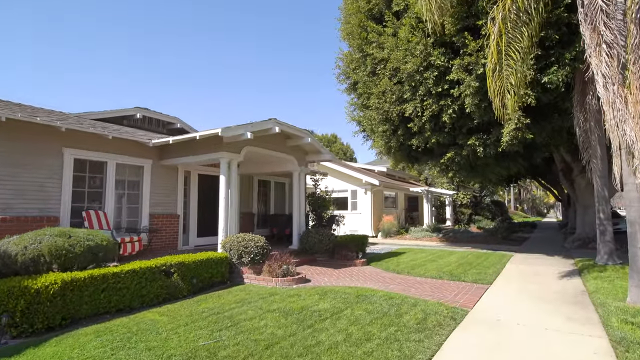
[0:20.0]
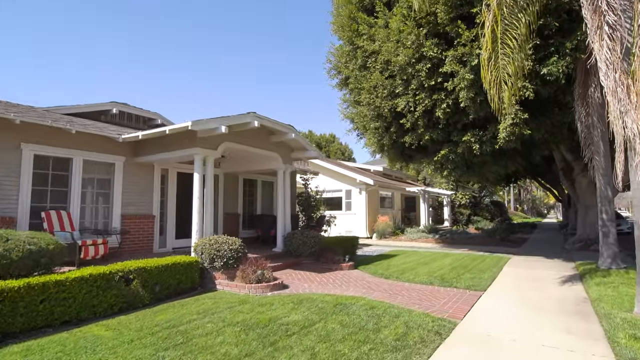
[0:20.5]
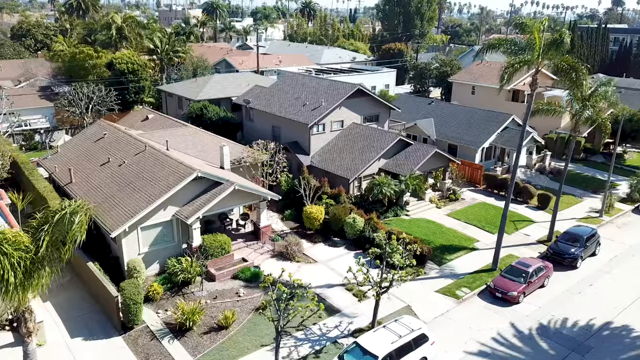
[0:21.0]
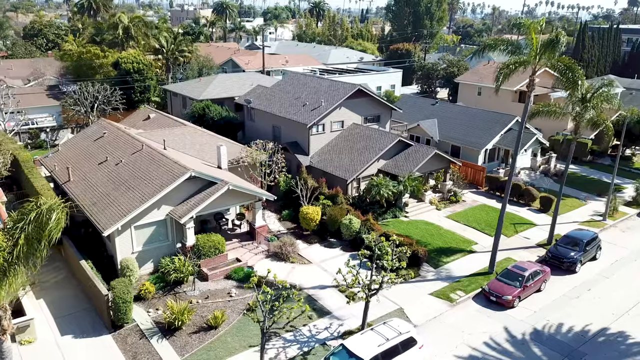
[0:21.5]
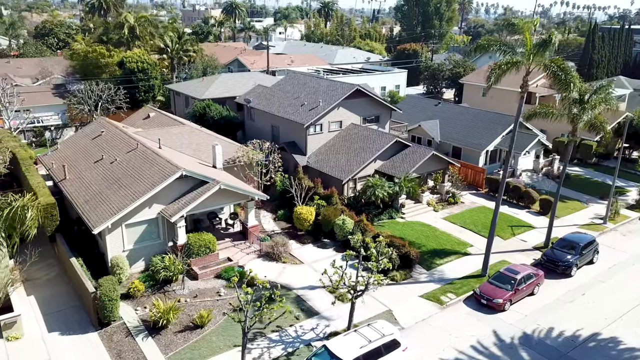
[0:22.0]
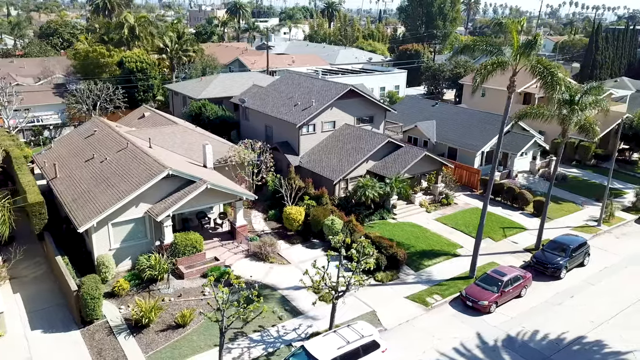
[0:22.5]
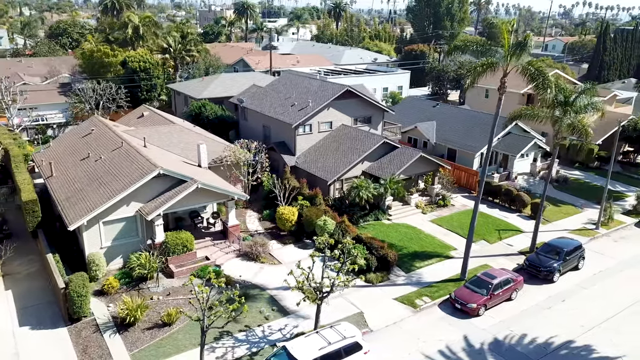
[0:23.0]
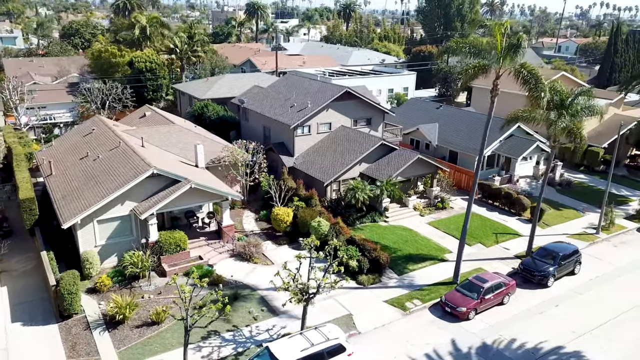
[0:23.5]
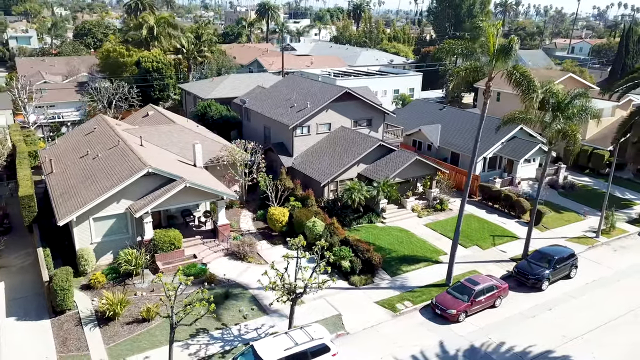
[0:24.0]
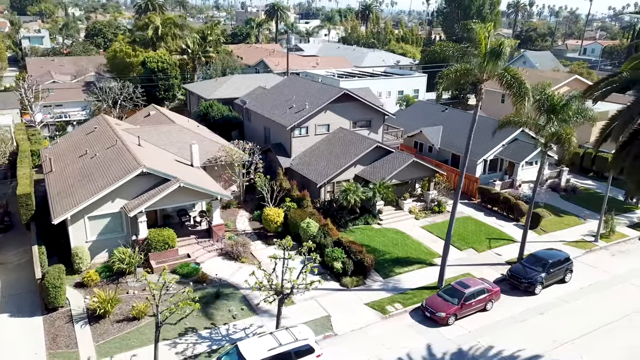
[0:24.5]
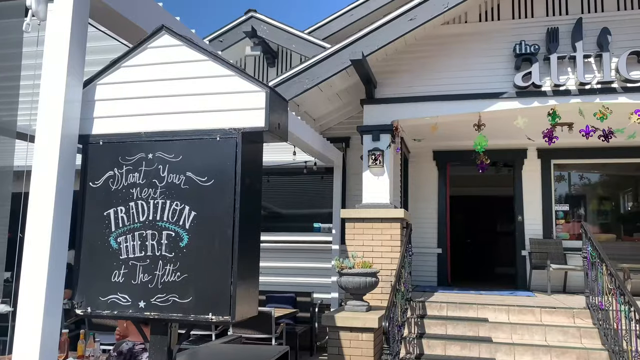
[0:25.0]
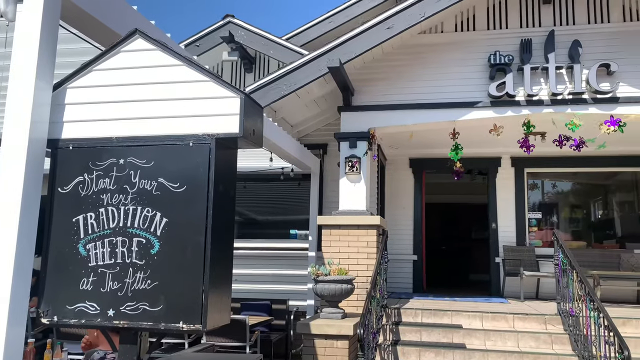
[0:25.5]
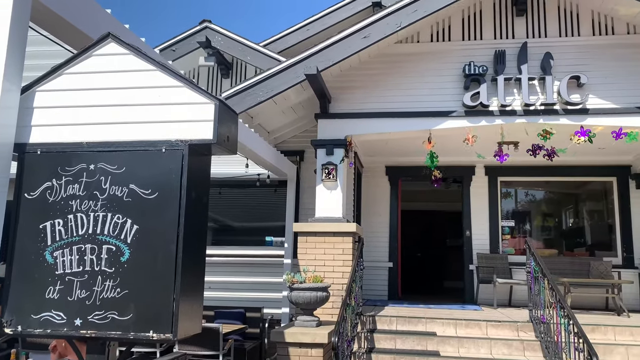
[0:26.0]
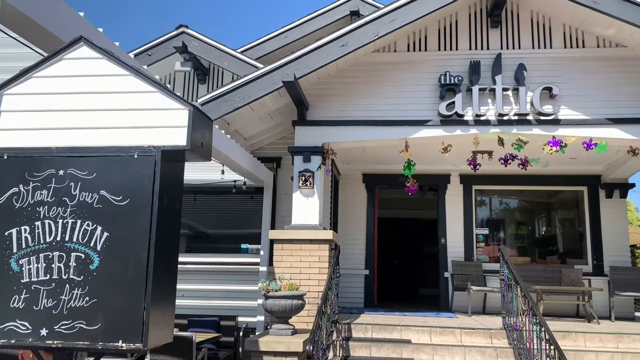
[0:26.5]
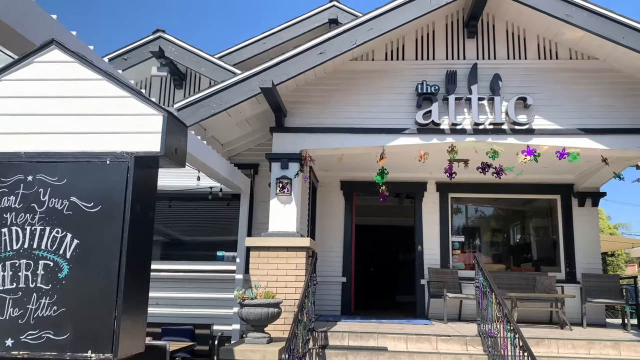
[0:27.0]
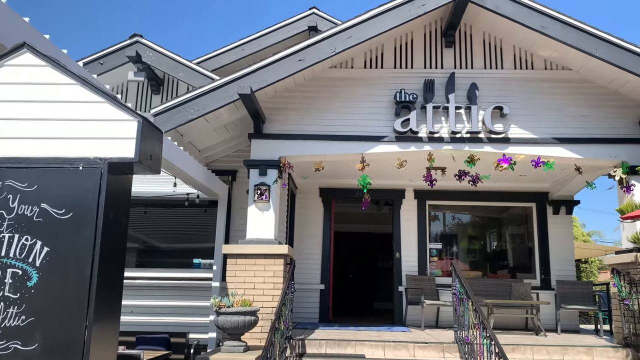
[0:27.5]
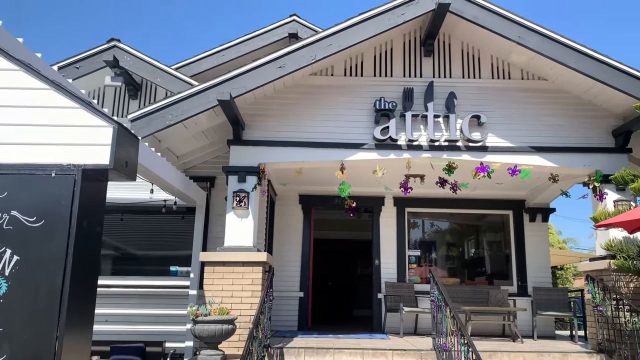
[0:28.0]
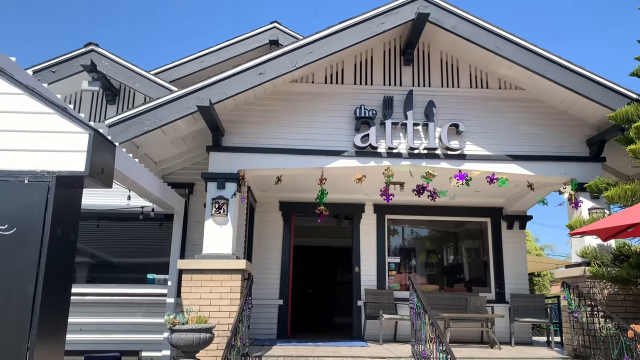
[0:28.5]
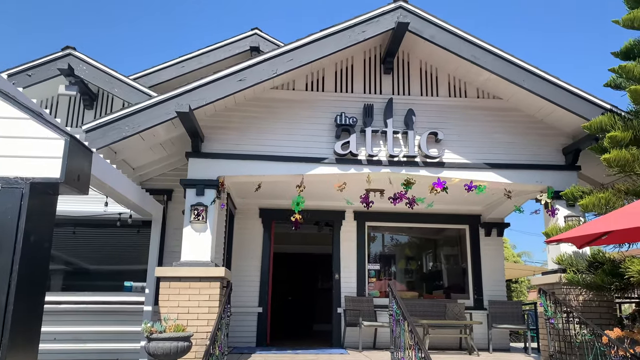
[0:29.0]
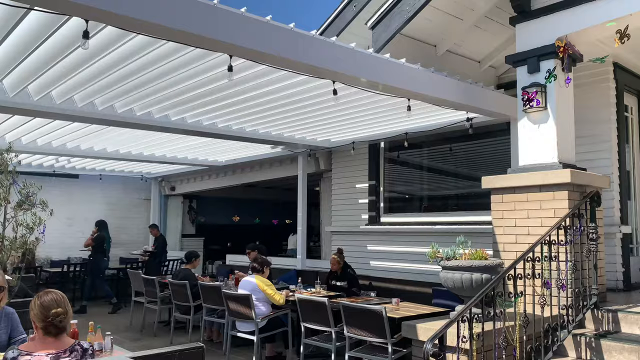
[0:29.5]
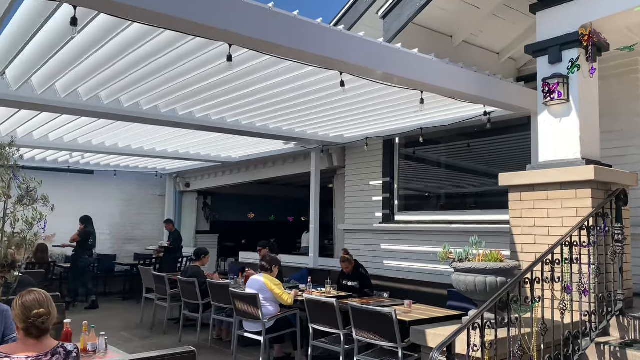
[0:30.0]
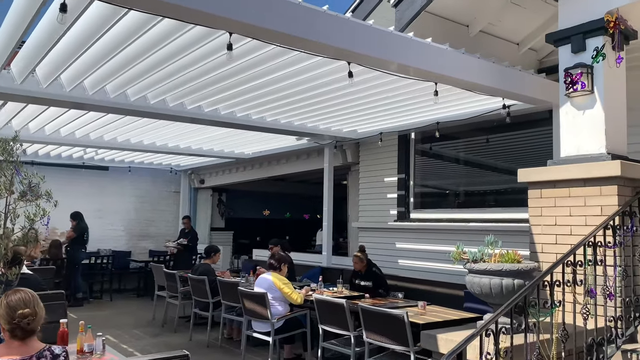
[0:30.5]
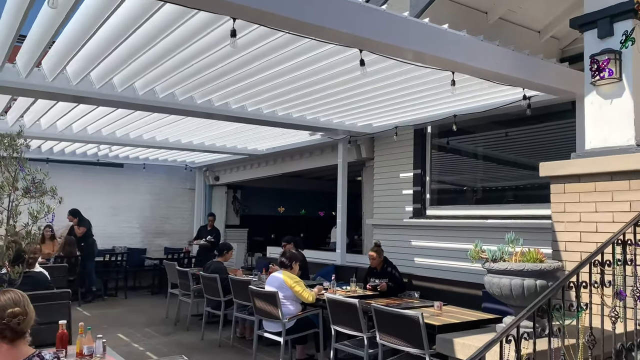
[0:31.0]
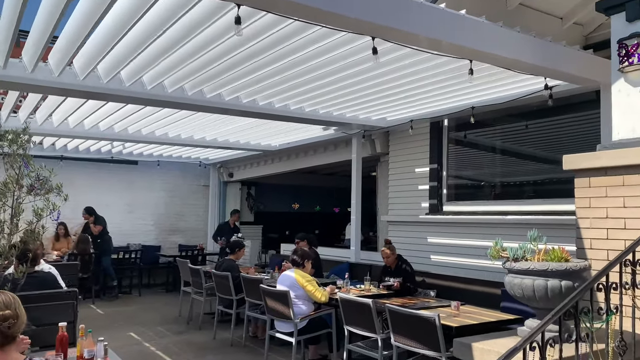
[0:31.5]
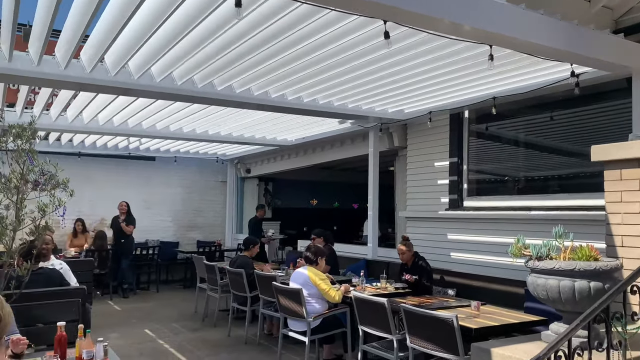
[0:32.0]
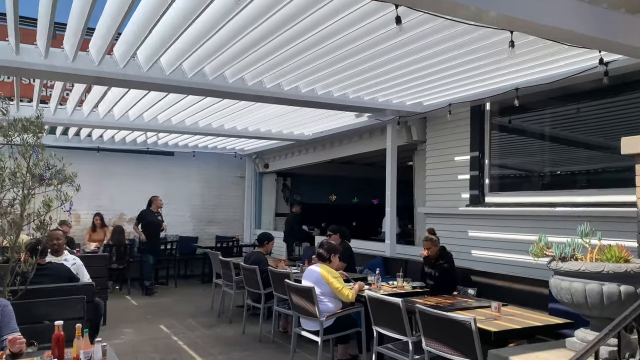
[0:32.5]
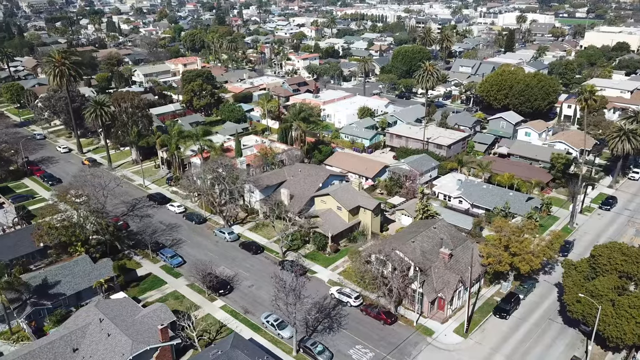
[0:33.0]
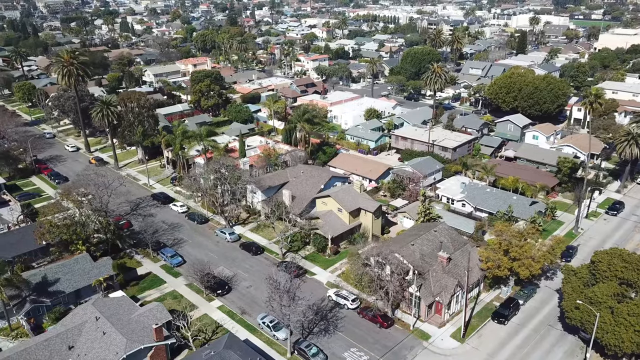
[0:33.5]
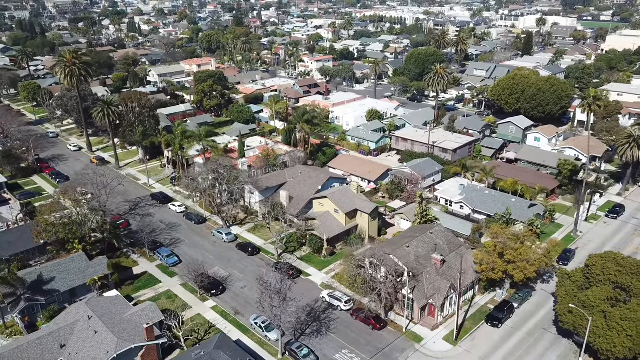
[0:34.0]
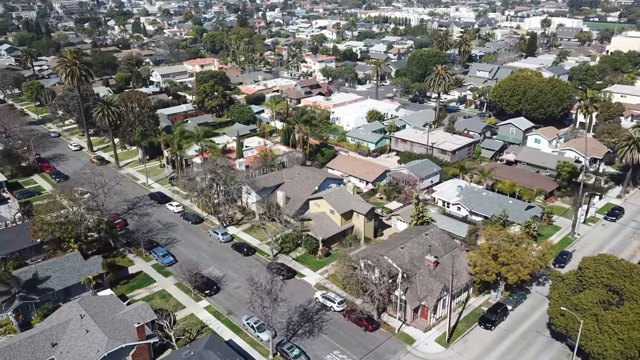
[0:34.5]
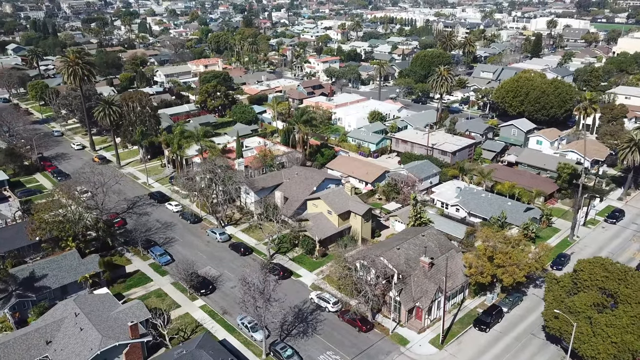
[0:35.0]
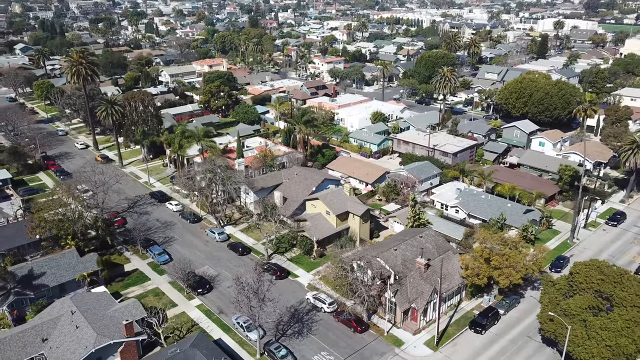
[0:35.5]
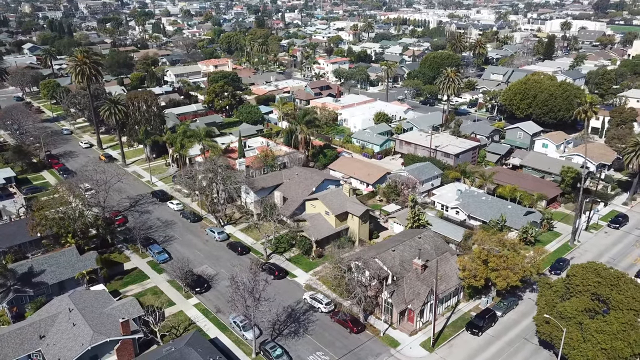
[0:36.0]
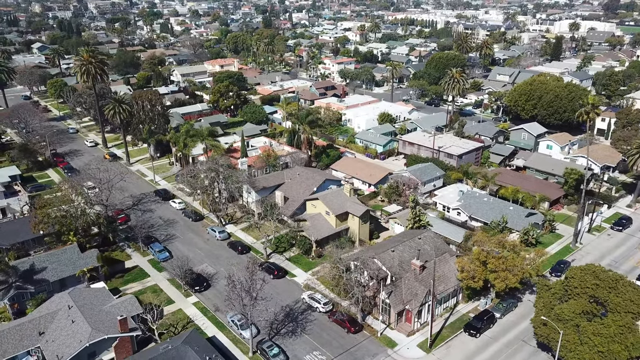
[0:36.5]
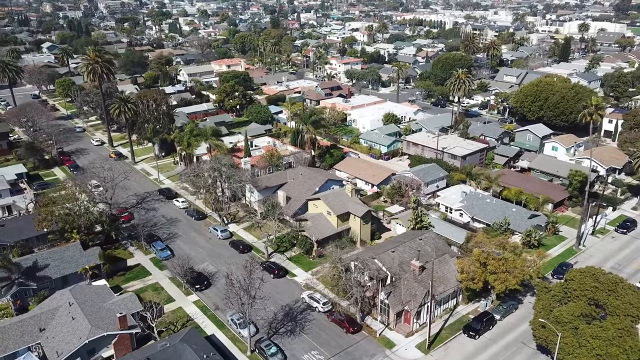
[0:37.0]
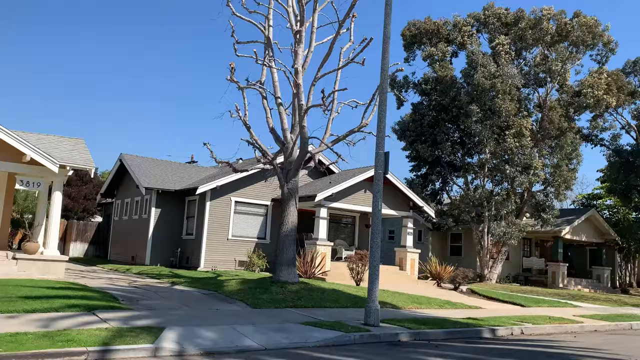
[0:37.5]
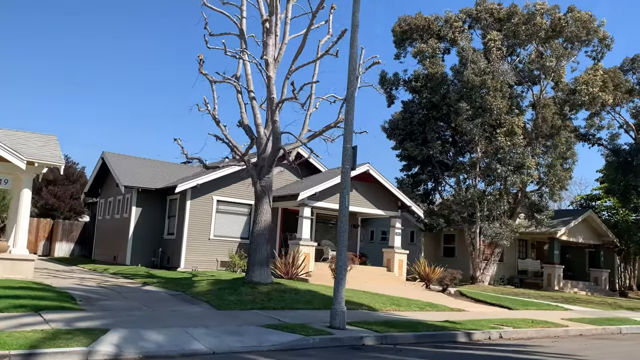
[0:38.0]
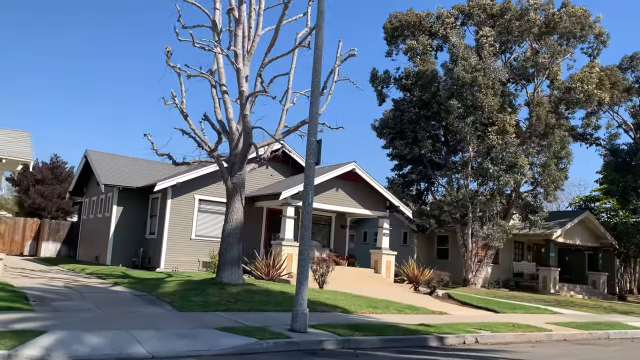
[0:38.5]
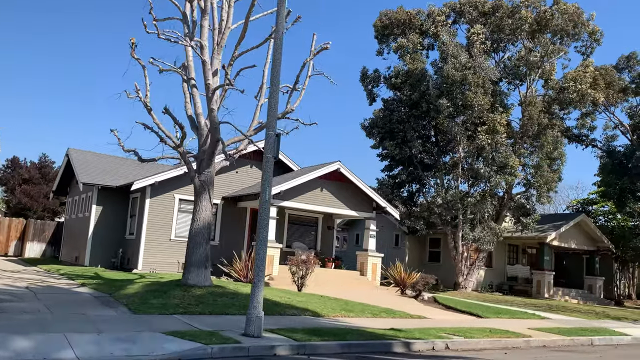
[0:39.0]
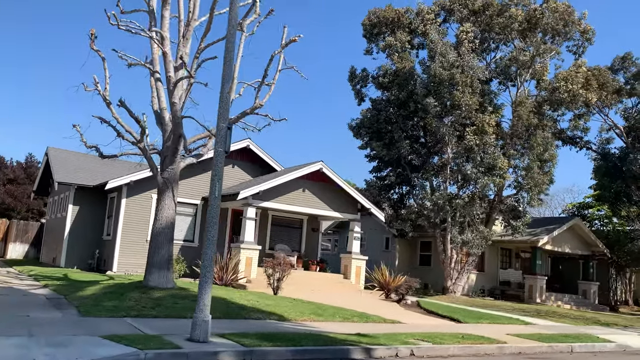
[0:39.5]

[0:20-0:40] The camera continues to move through the neighborhood, which has trees and houses with no fences, only green, well-kept, nicely cut lawns. Some of the trees are palm trees and some are very big, green bushy trees. An aerial view then shows houses that are two-story buildings, with cars outside. The video then shows what looks like a small, casual restaurant serving fast food such as fries, fried chicken, wraps or burgers, where waitresses serve food and people sit comfortably; it is not crowded.